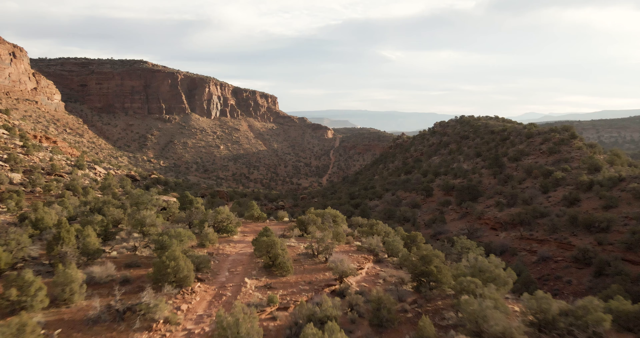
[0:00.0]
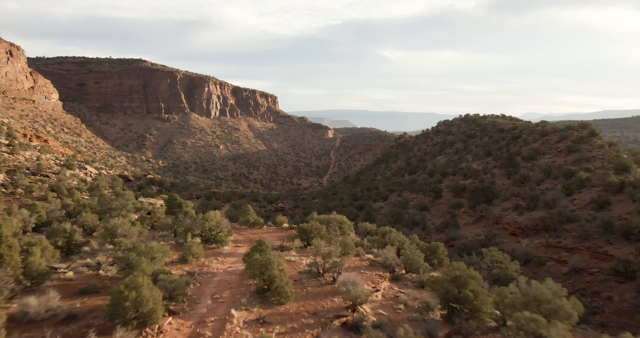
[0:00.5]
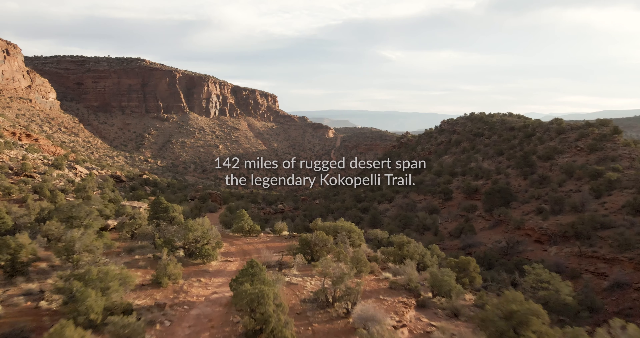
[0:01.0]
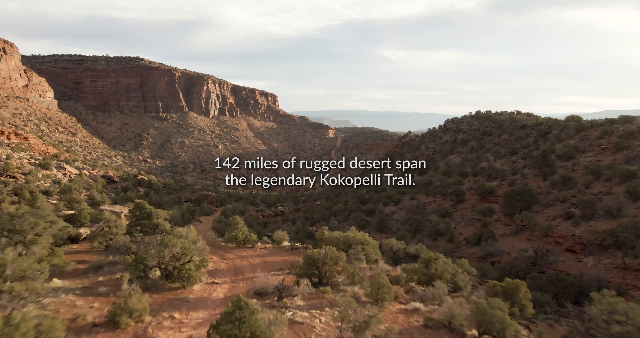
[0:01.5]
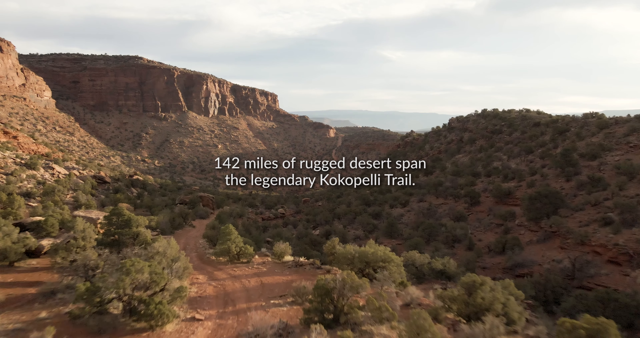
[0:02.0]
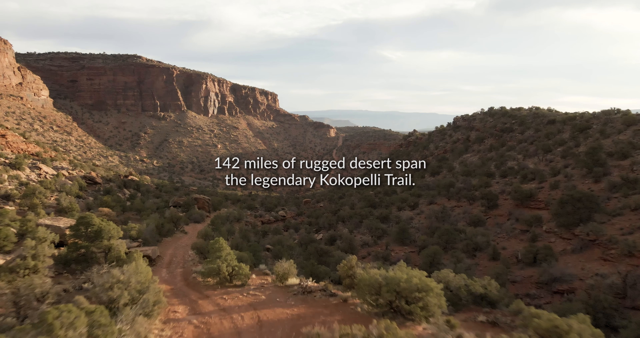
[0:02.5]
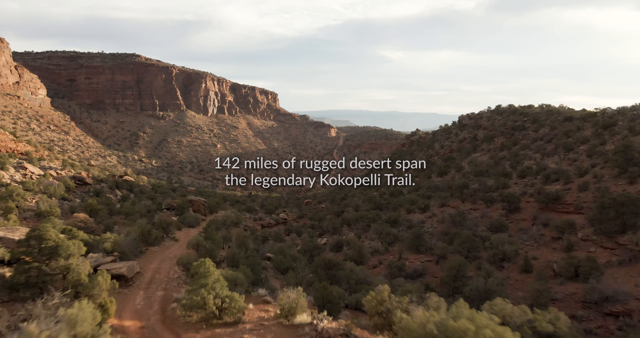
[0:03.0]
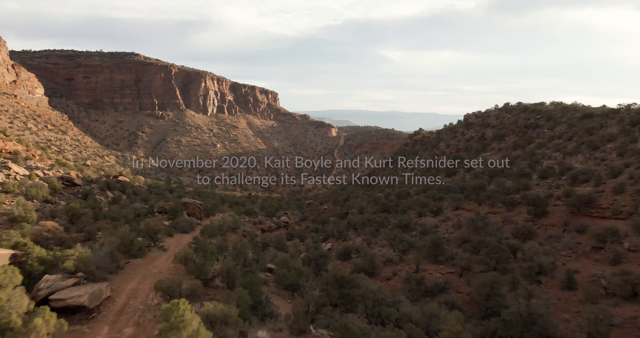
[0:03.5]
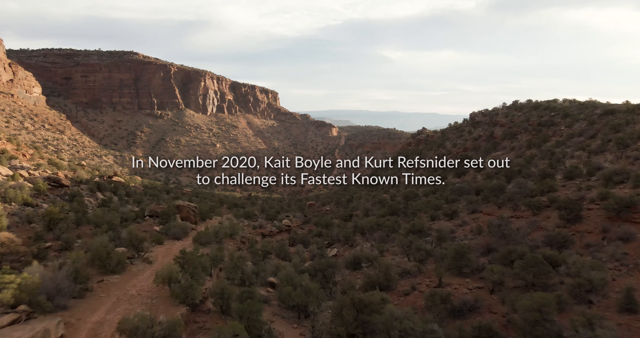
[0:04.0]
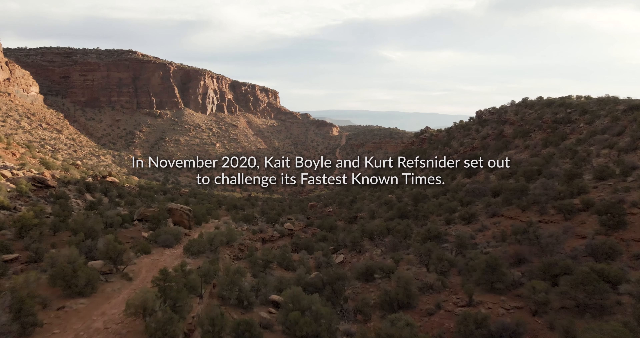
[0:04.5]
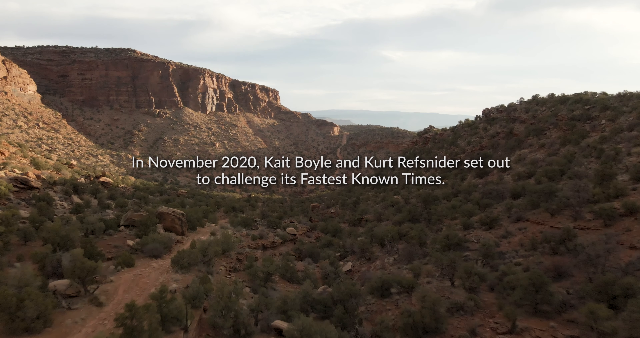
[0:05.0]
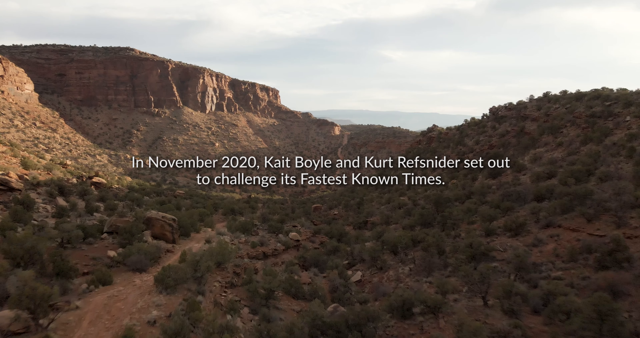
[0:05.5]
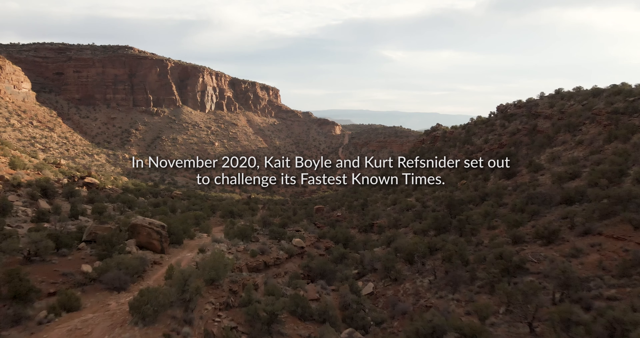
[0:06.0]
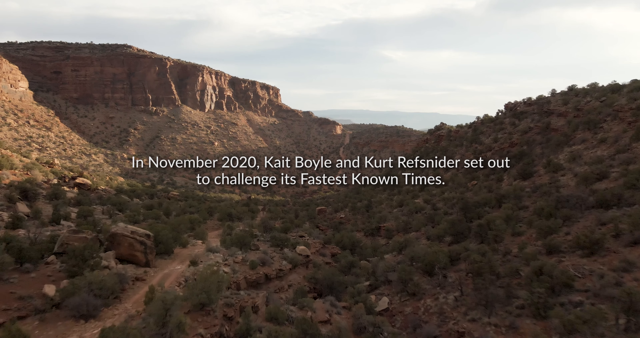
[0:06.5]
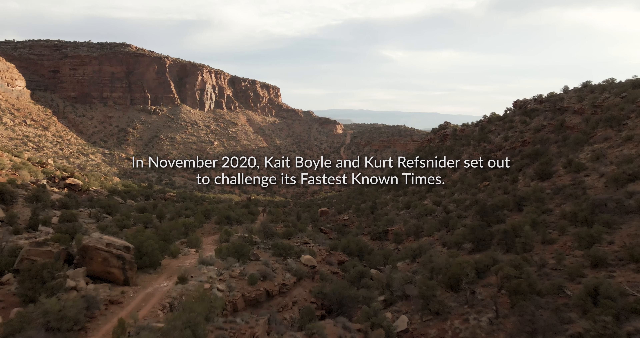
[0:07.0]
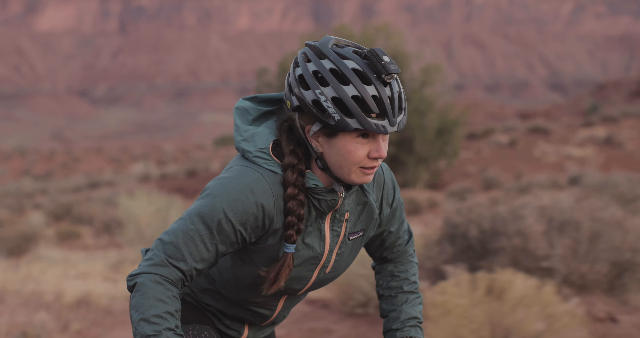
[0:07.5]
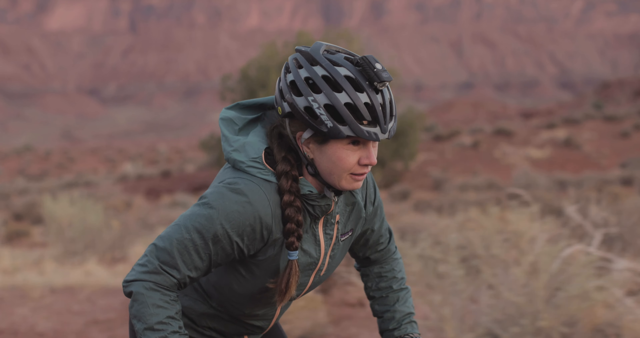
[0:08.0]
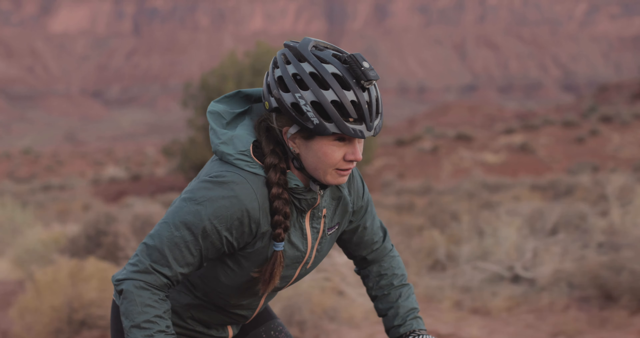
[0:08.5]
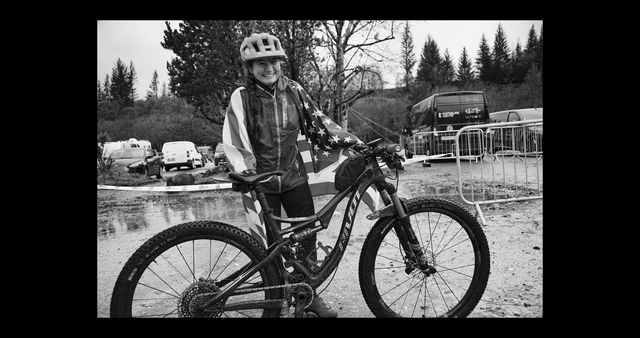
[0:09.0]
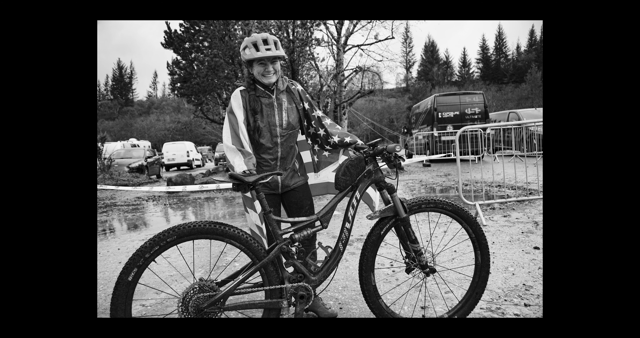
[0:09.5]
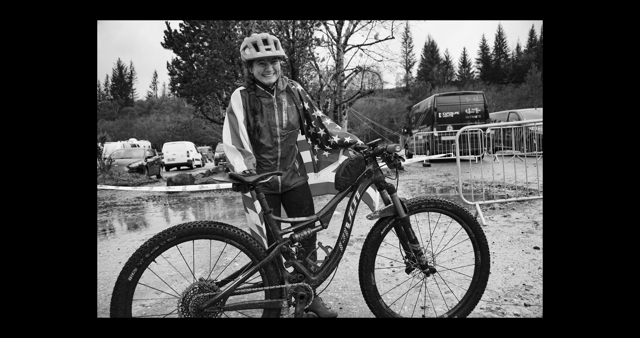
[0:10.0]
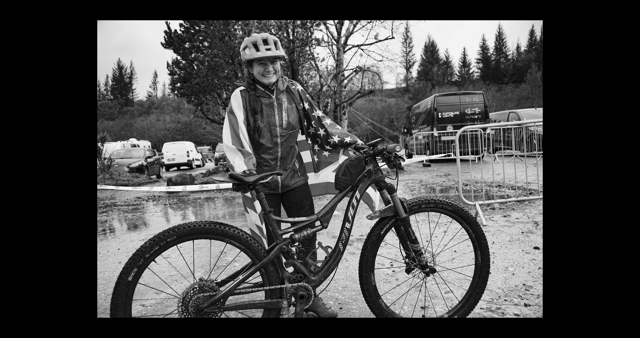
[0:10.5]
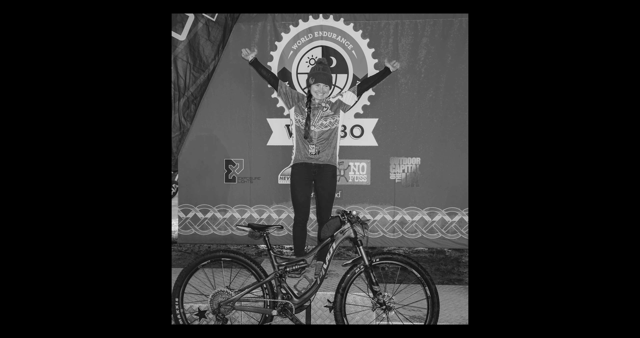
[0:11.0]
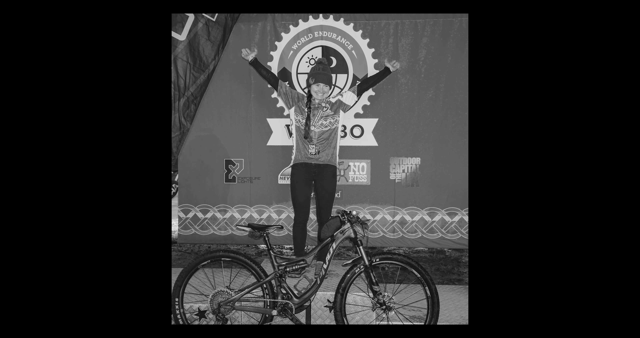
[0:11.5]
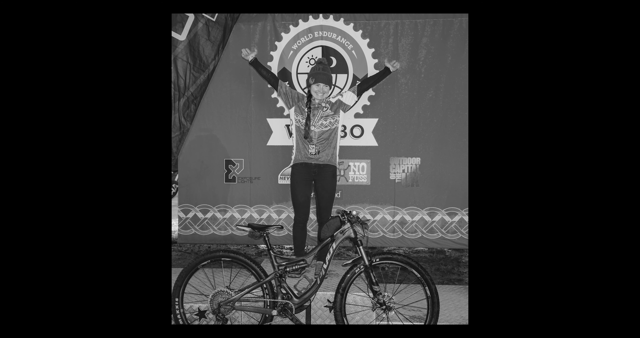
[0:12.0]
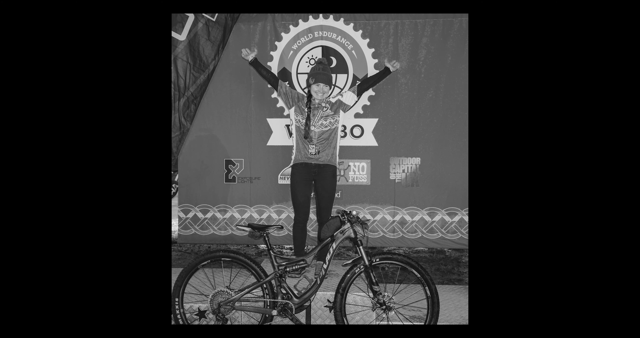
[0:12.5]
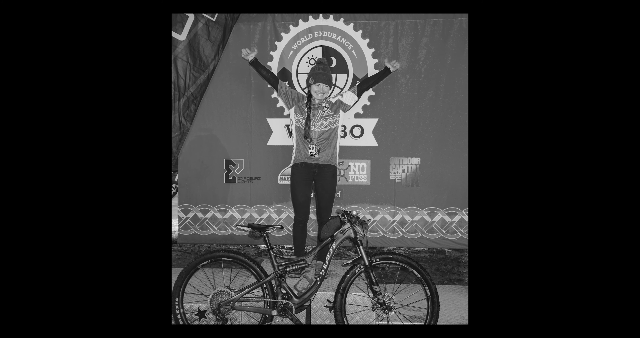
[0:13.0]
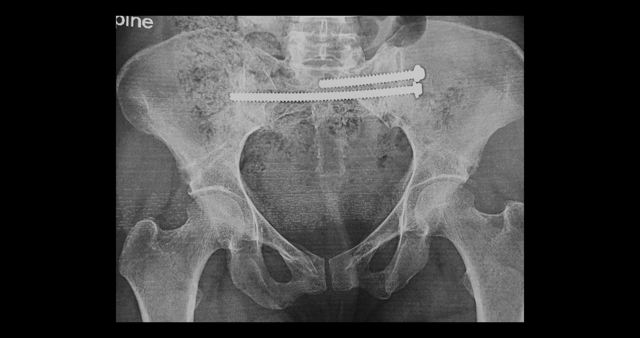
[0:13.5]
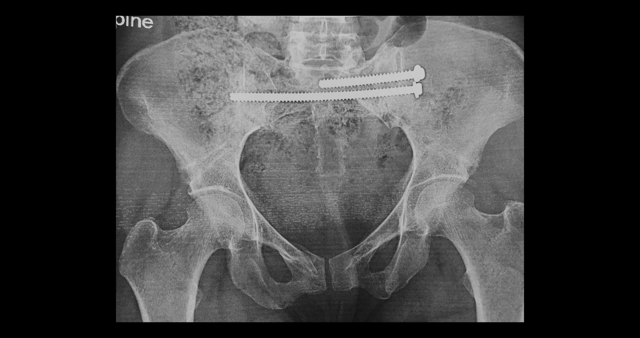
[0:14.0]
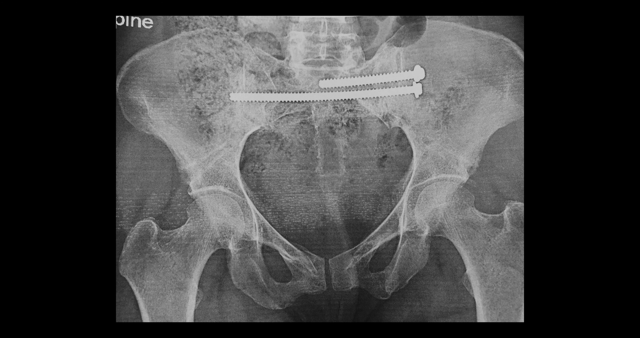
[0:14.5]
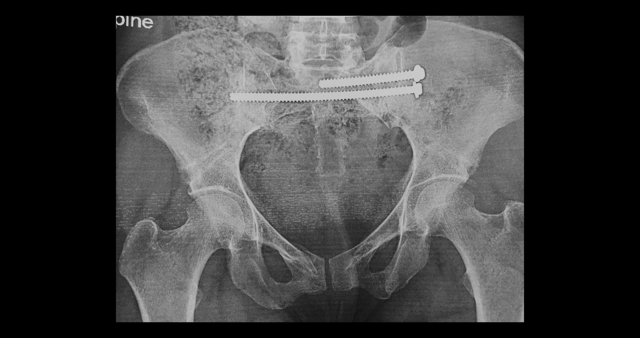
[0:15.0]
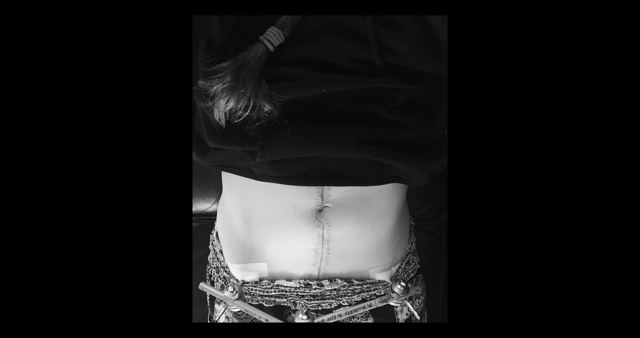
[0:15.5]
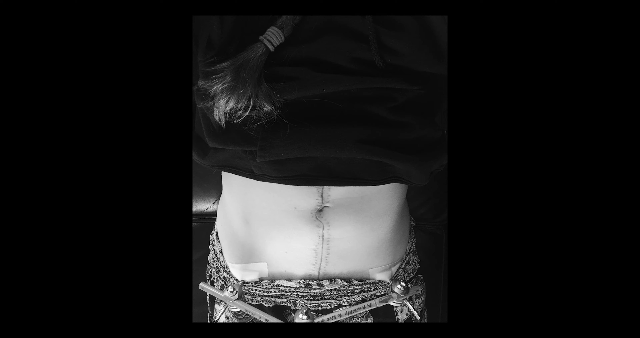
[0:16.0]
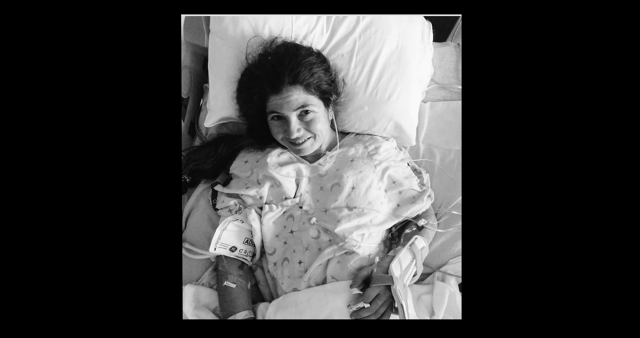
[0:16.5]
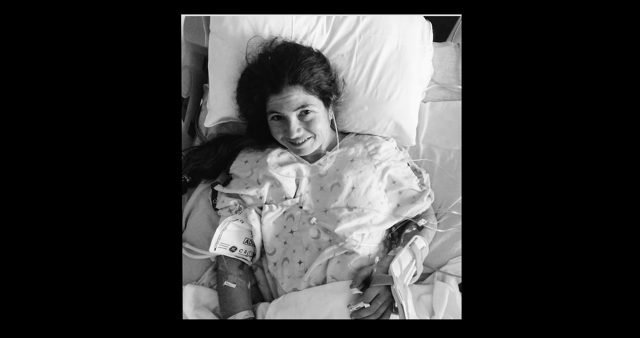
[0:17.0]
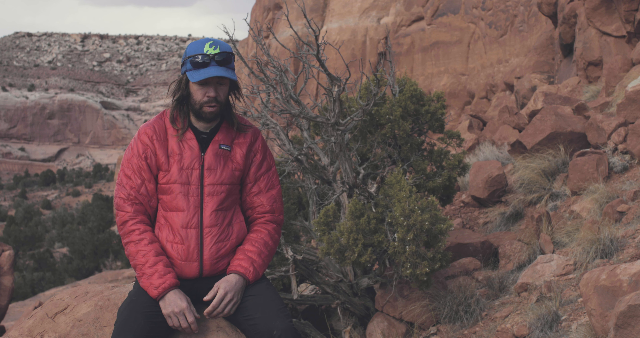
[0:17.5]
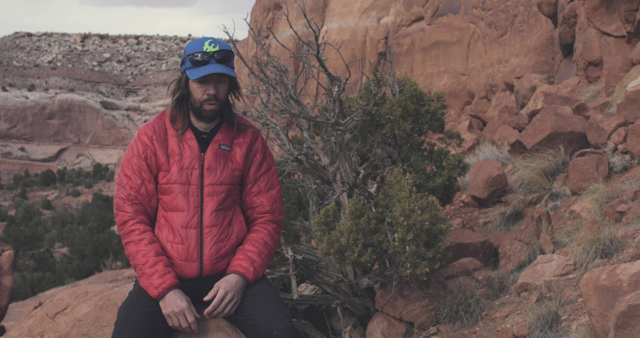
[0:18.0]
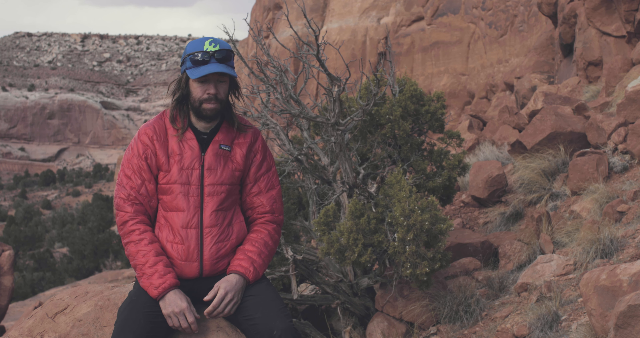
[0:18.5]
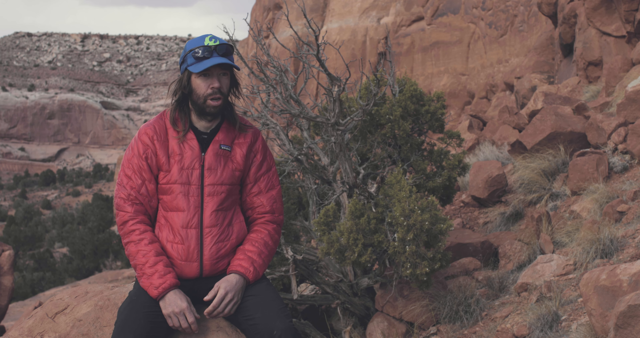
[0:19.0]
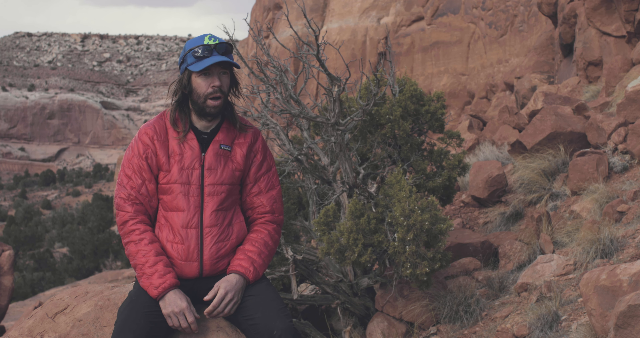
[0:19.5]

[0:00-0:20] In a very natural environment, a young boy rides a cycle. A woman then lies on a bed in what seems to be a hospital, with a severe injury on her lower leg. Afterward, some physical exercise is shown briefly.